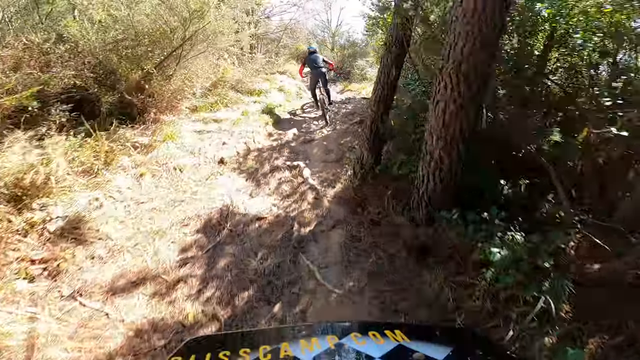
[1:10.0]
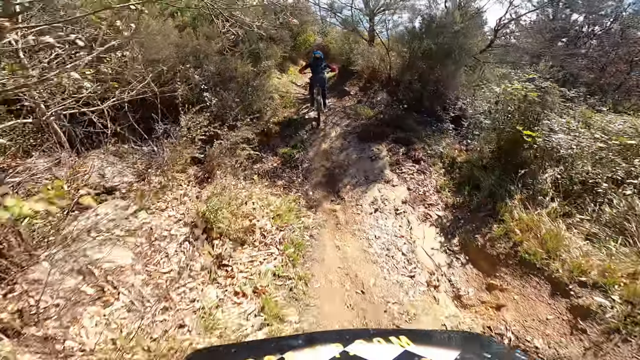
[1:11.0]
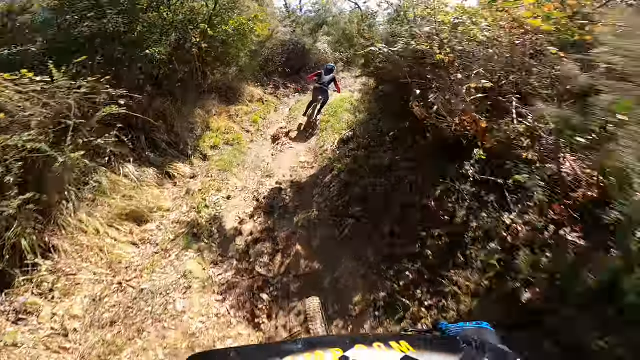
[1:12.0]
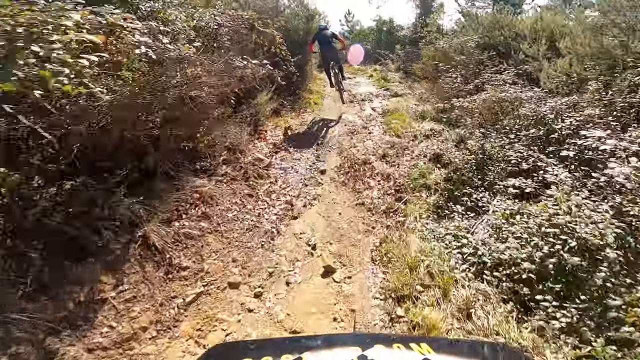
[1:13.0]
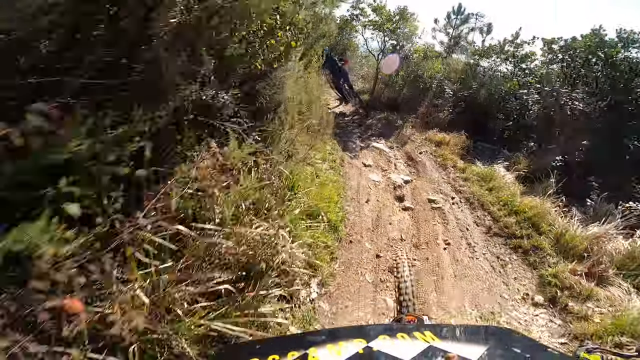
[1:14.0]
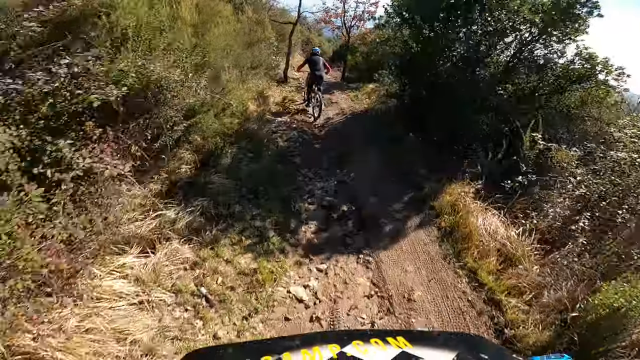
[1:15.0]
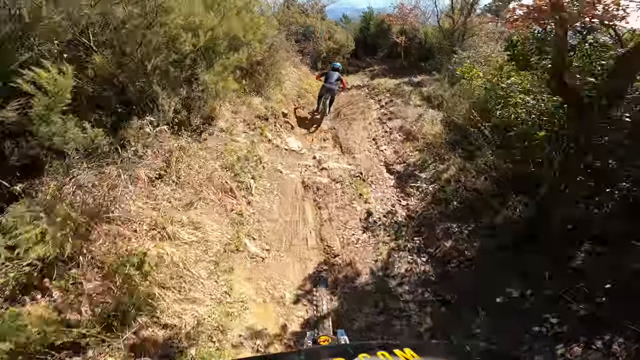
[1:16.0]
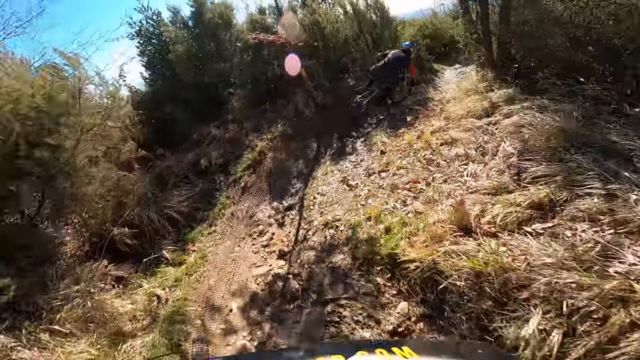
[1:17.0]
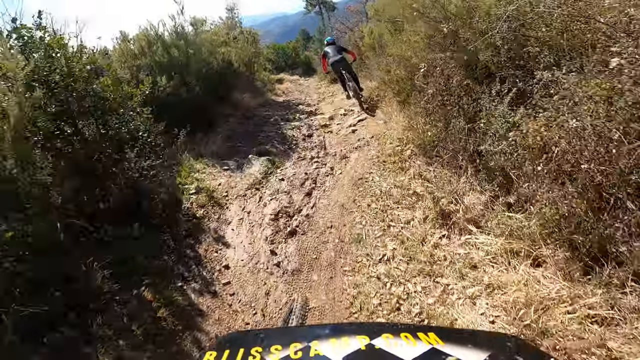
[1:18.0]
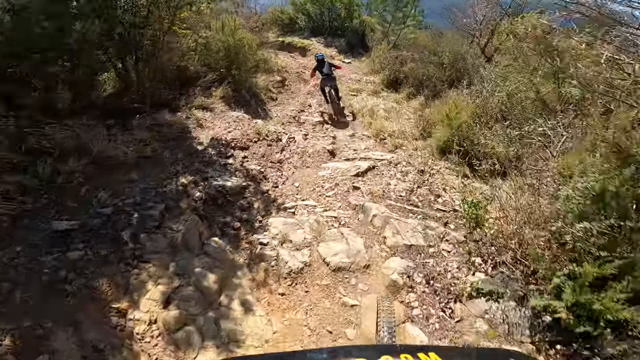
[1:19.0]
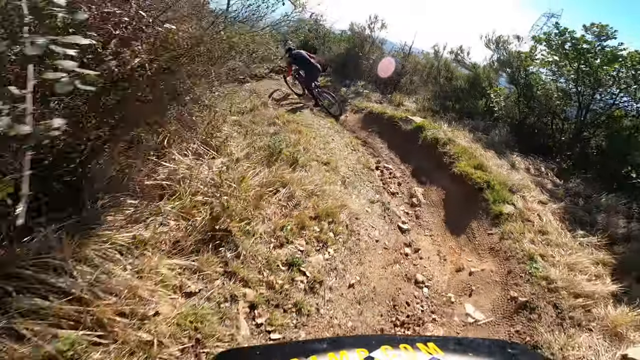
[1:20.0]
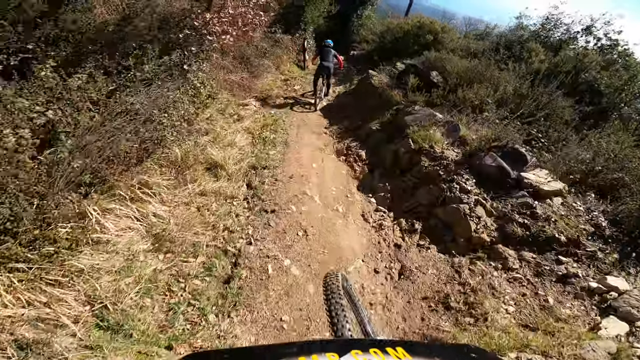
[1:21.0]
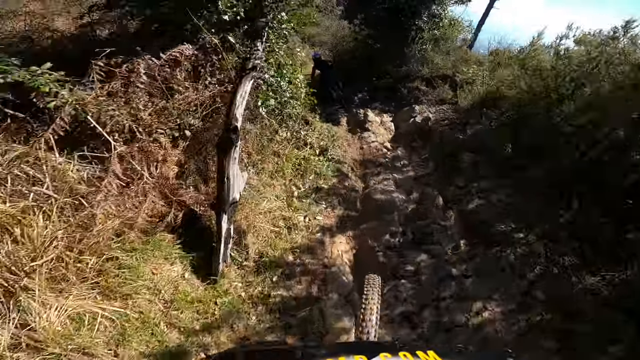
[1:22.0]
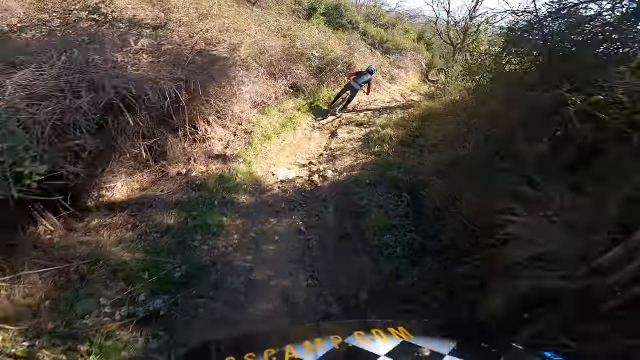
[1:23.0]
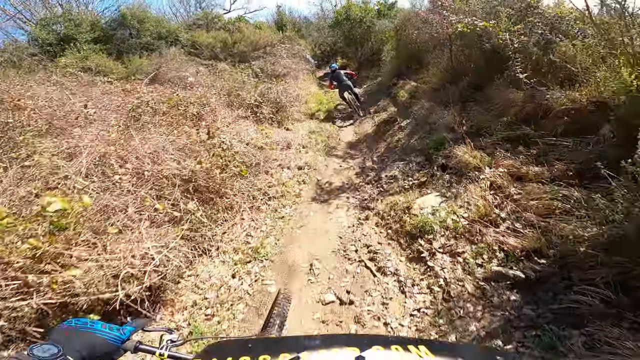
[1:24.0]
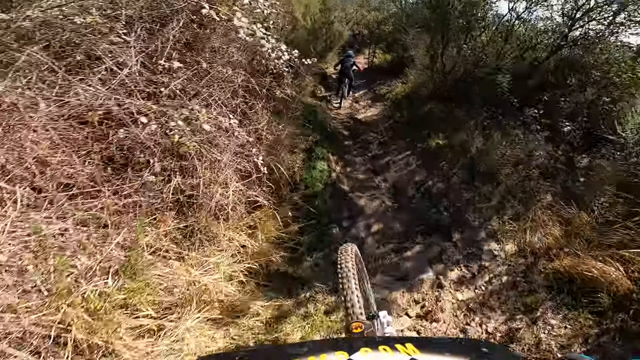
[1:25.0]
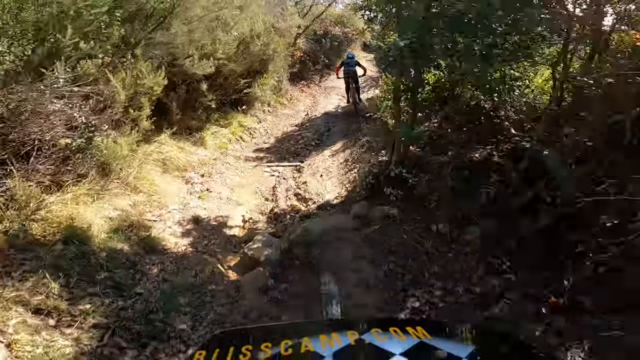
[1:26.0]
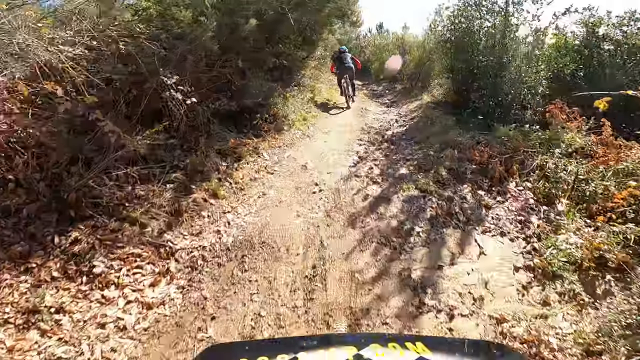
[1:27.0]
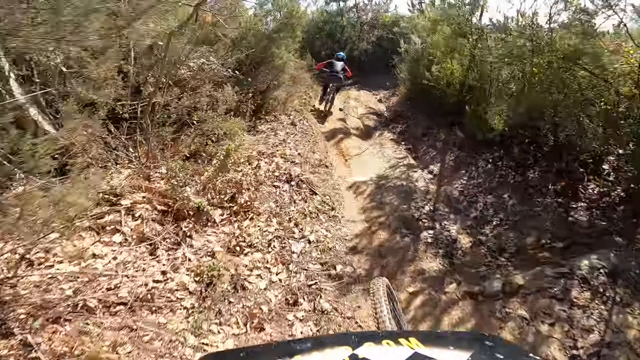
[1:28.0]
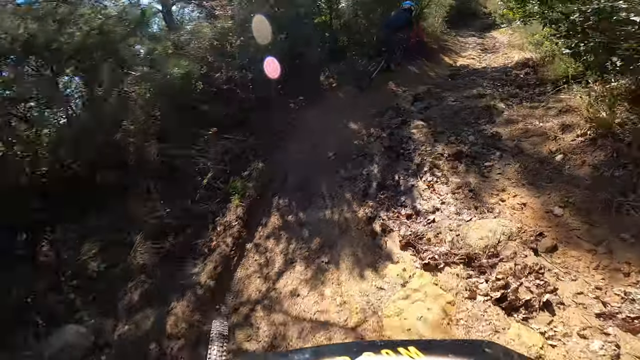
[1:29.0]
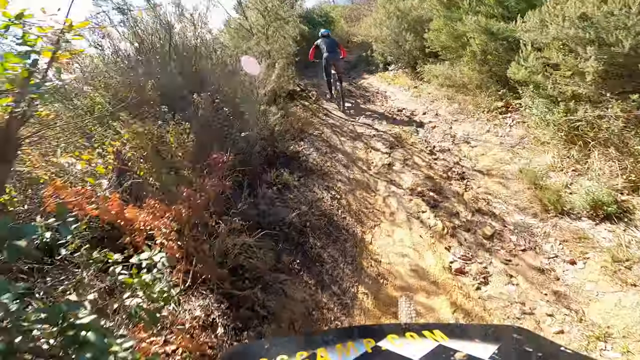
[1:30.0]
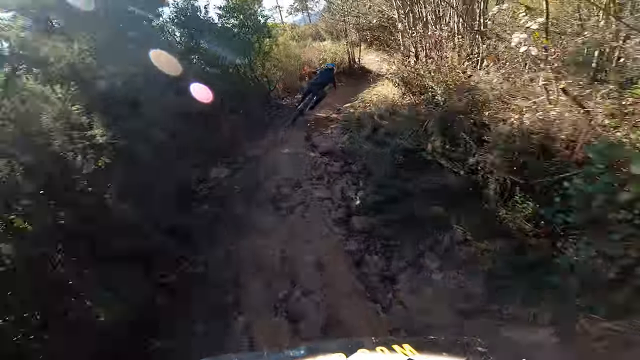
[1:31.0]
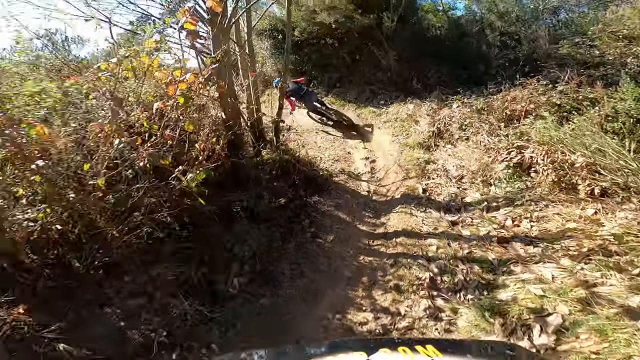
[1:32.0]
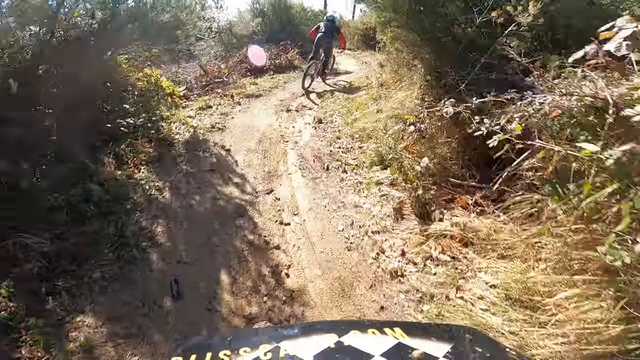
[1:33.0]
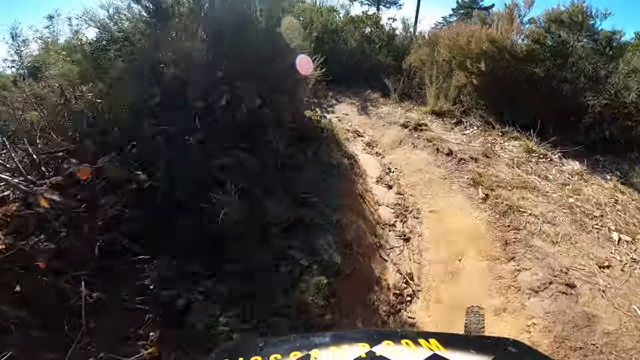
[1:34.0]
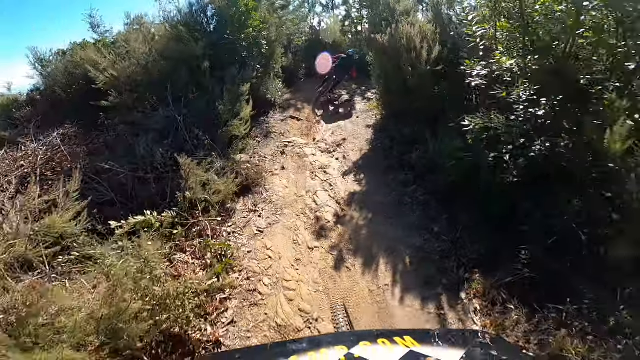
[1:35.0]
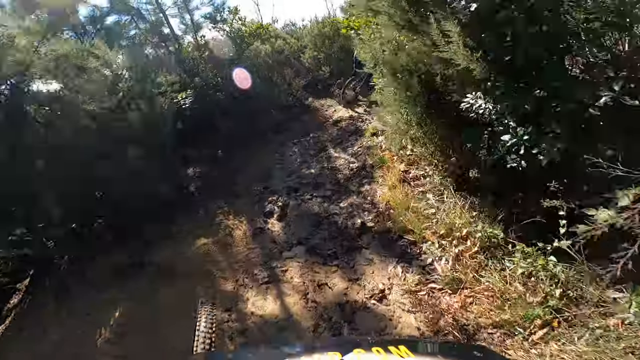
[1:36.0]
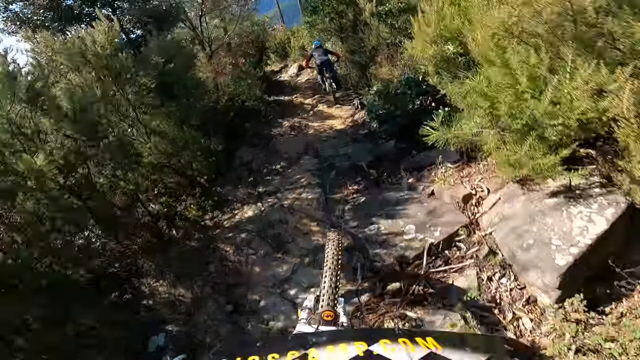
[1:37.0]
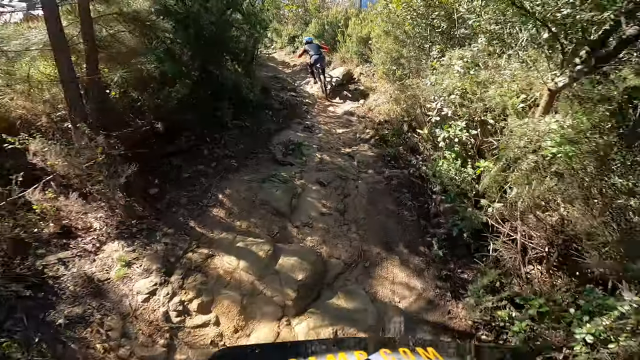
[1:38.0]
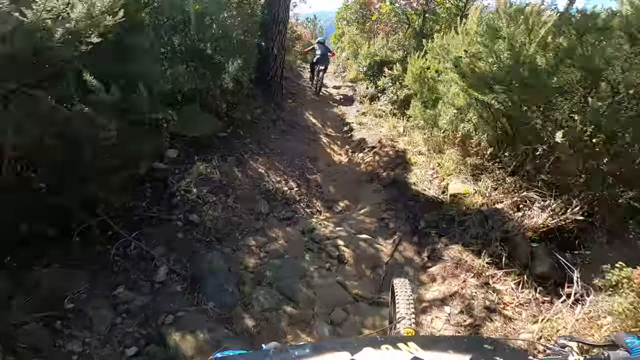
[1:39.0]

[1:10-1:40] The camera is still riding behind him. He does a couple of jumps, getting a couple of feet in the air, and swerves to the right and to the left. The road is very winding rather than straight, and judging by his speed it seems to be going downhill. He continues to the left, makes a hard left, then goes right and turns right again, navigating rocks and various stumps all over the road. Sunlight comes through from the background, lighting up the road. There is no mud or slippery conditions; the ground looks very dry.